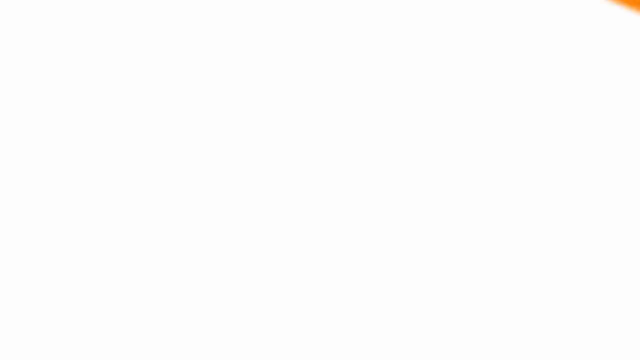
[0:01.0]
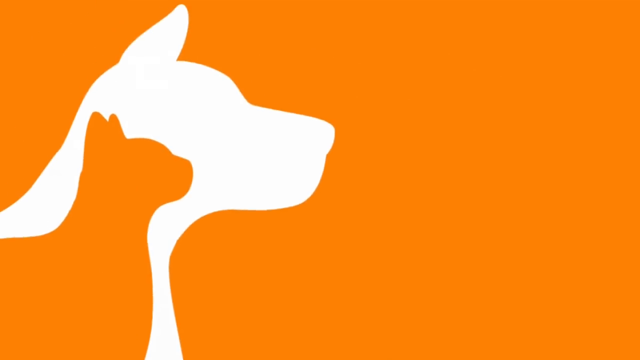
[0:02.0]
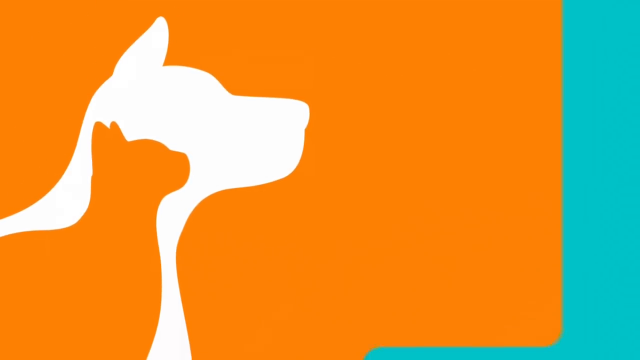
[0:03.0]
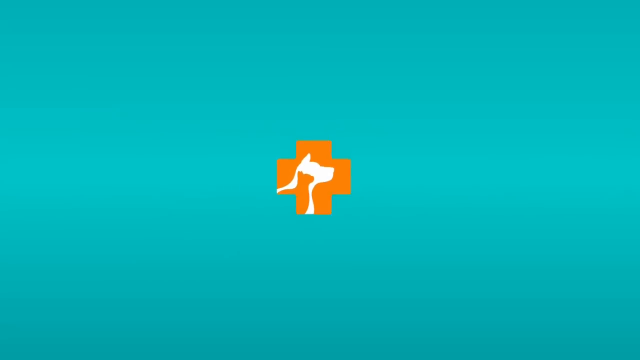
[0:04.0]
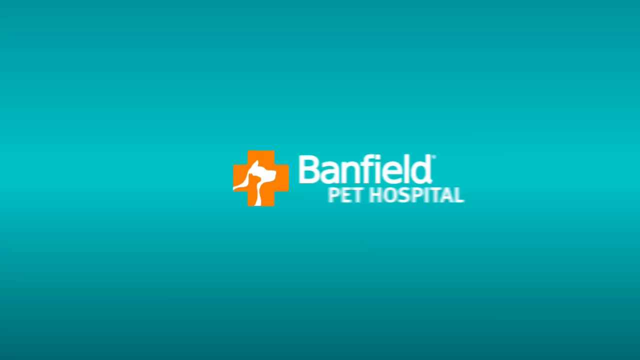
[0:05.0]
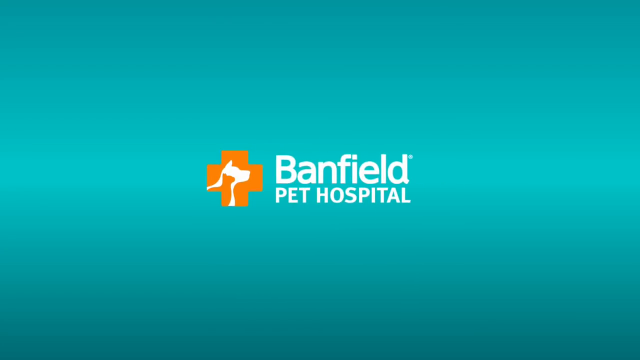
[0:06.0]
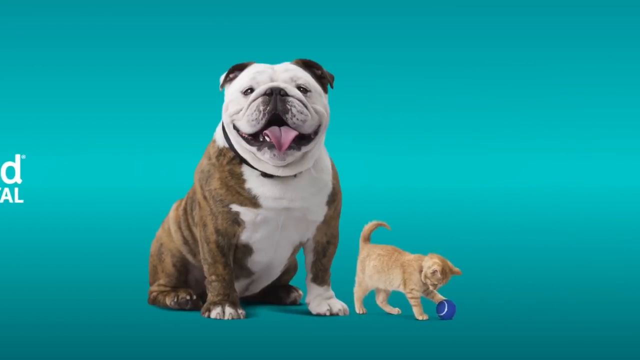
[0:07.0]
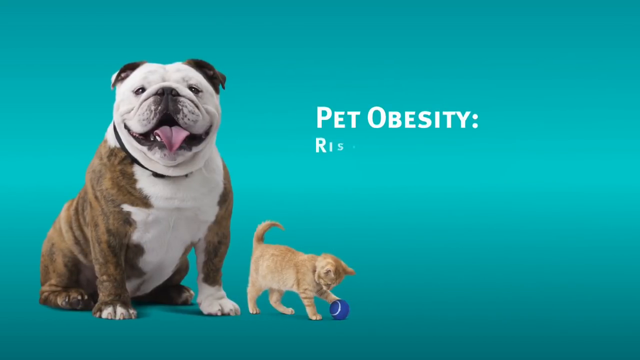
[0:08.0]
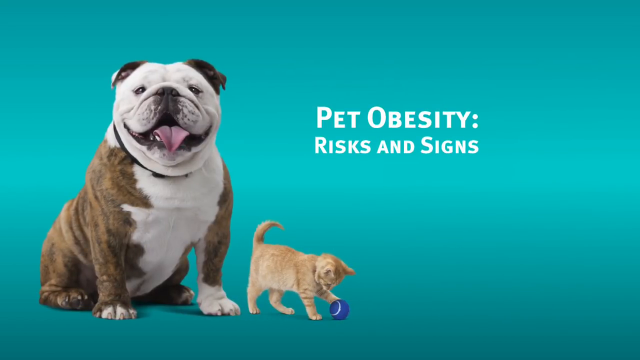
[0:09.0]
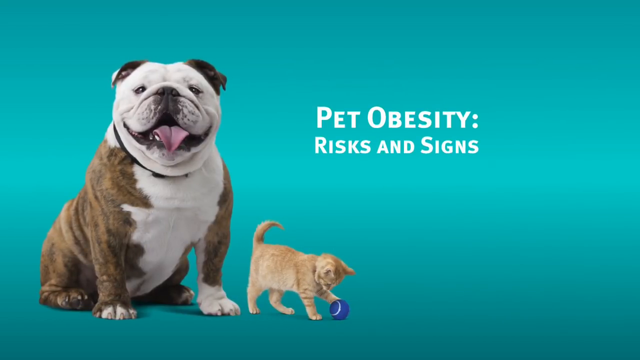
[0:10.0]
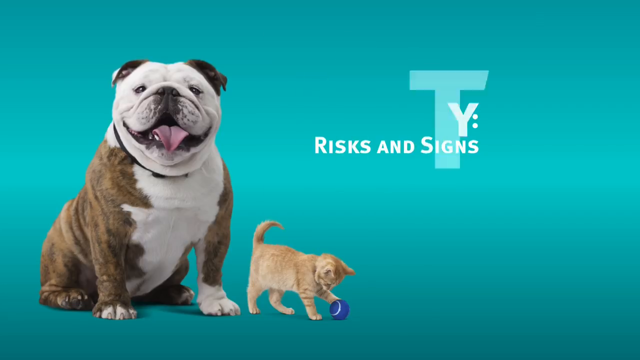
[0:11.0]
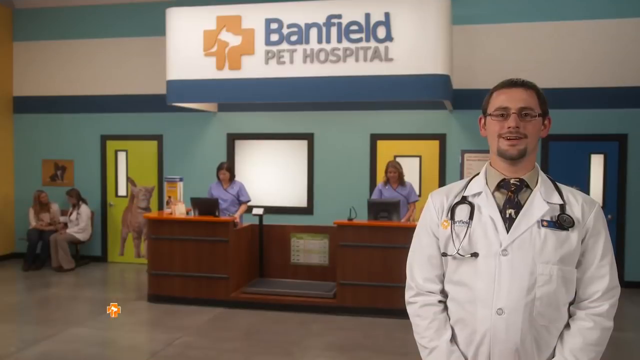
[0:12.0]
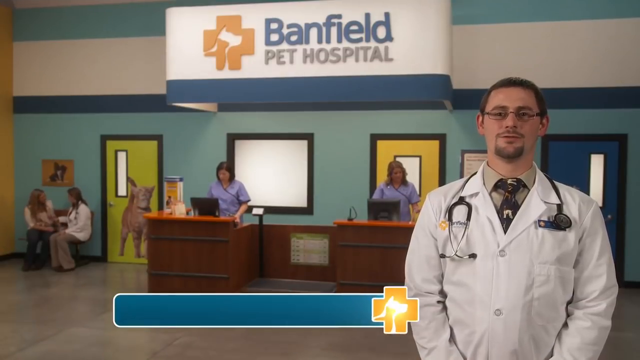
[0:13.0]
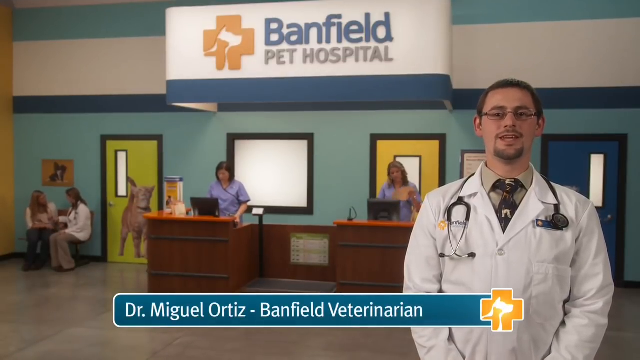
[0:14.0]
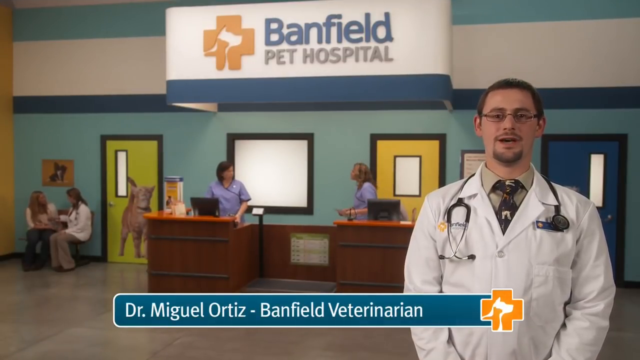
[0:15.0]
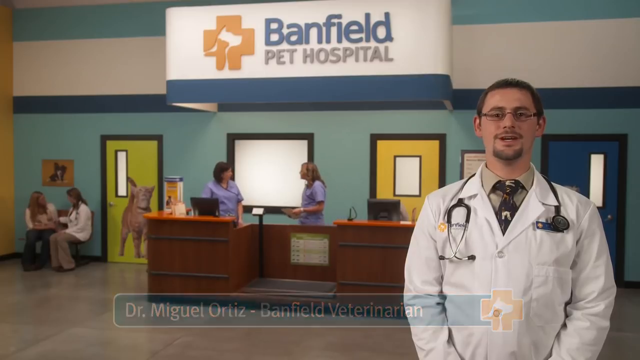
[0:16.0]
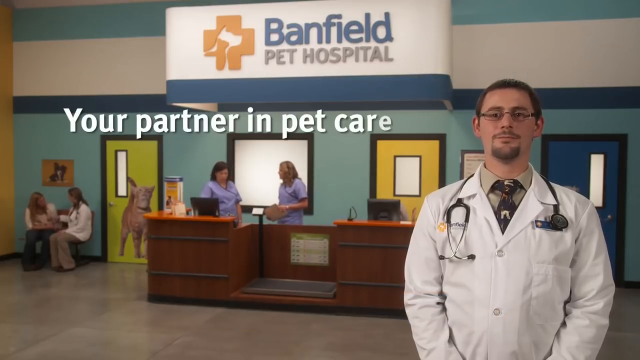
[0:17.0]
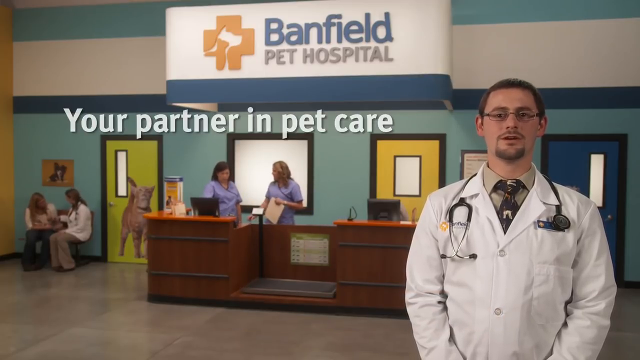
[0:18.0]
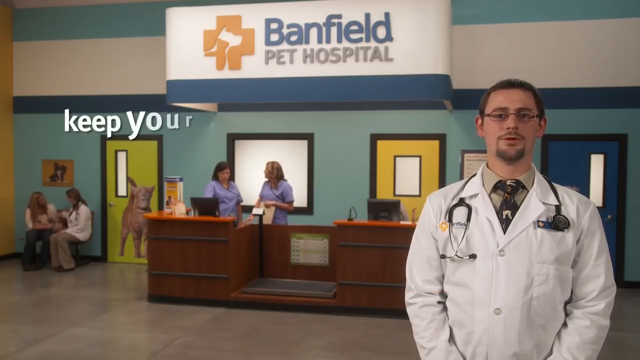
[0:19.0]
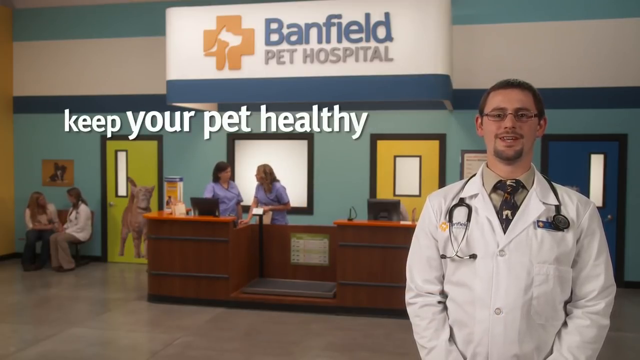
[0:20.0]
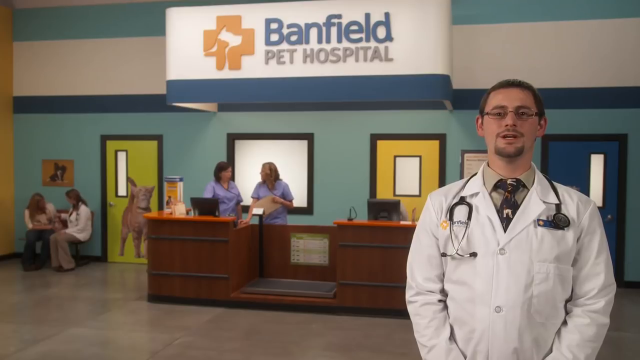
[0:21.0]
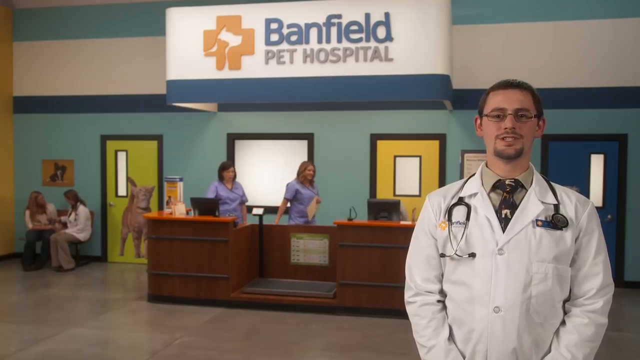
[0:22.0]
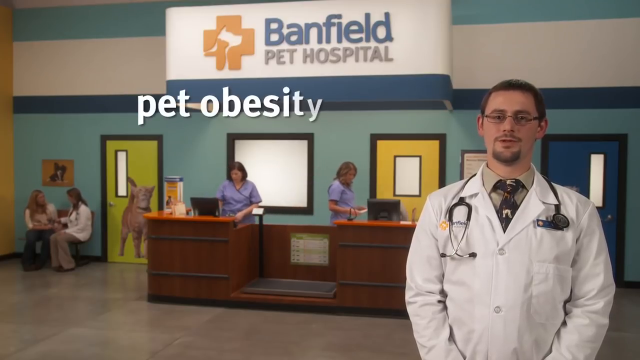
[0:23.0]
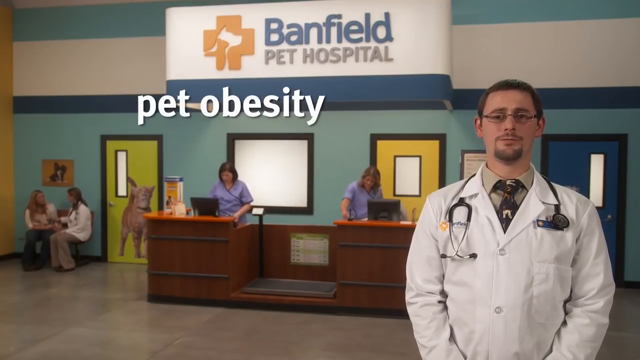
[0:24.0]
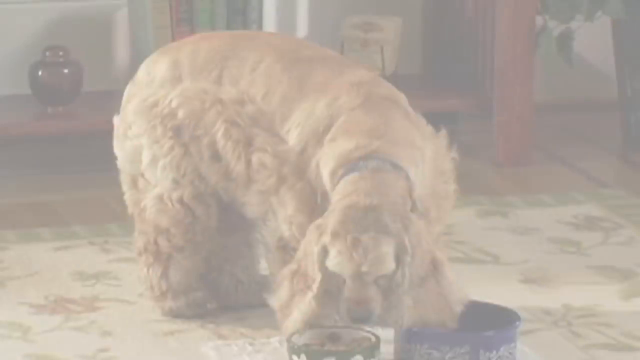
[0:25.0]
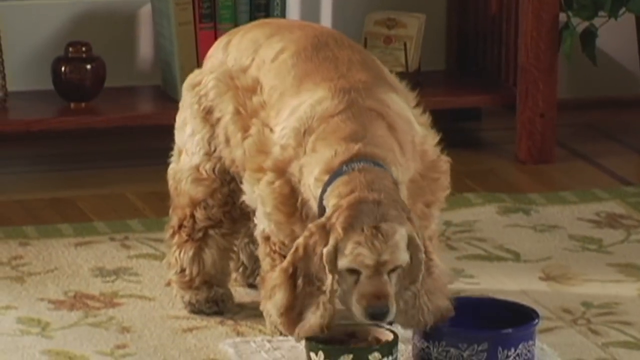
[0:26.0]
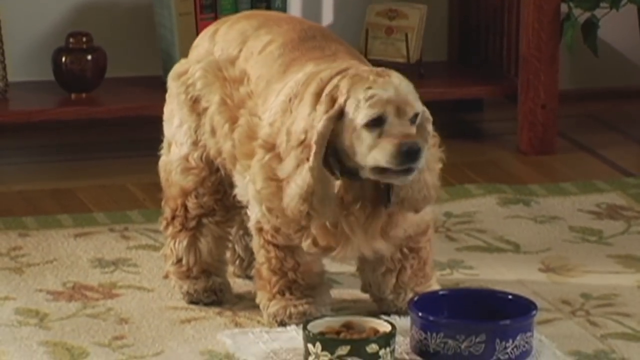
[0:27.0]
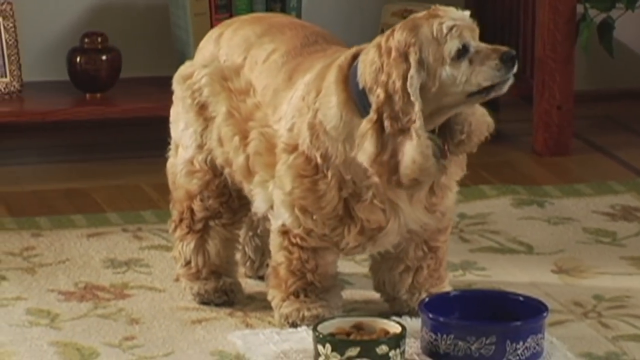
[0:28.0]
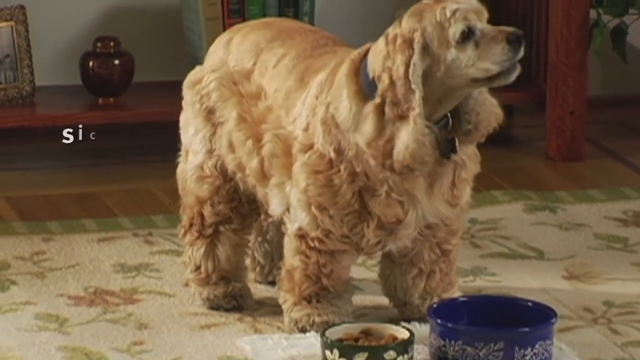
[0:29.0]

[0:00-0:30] The video concerns the Benfield Pets Hospital, a hospital for dogs, cats and other pets. Dr. Miguel Ortiz appears on screen. Behind him, patients are sitting, and someone is at the reception. The doctor is well dressed, wears spectacles, has neat hair and has his equipment on him. Nurses are also present. It is stated that a pet can be a partner and that you should keep your pet healthy.